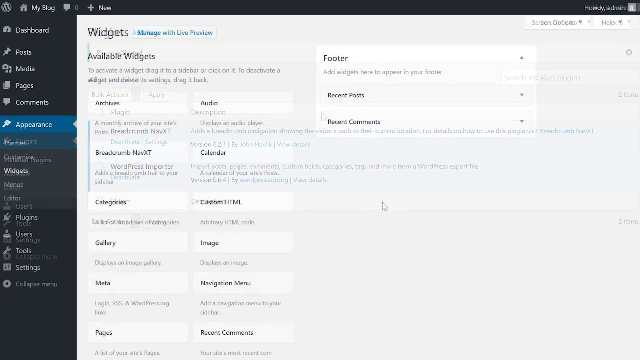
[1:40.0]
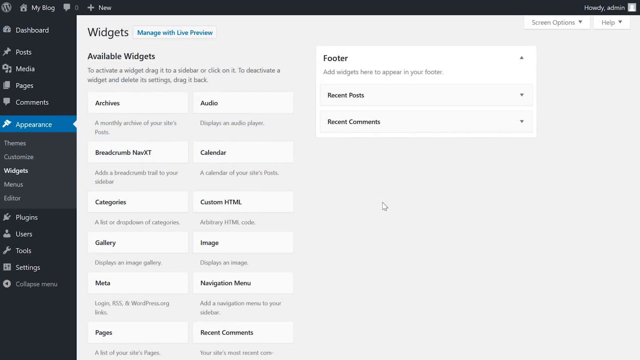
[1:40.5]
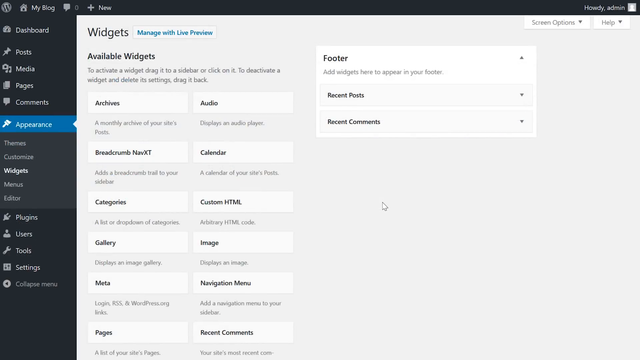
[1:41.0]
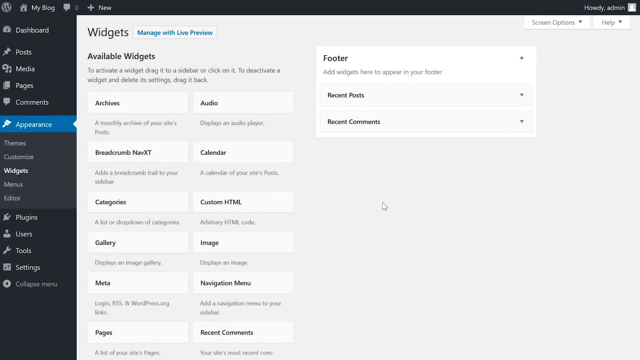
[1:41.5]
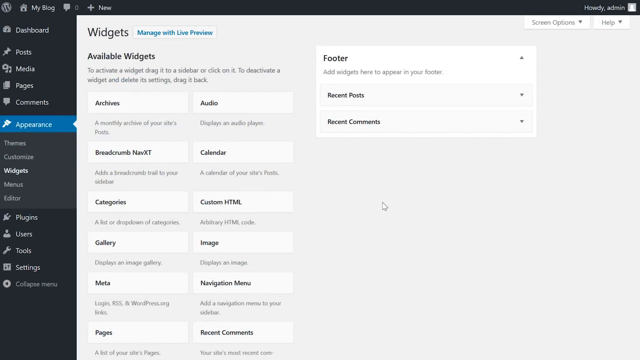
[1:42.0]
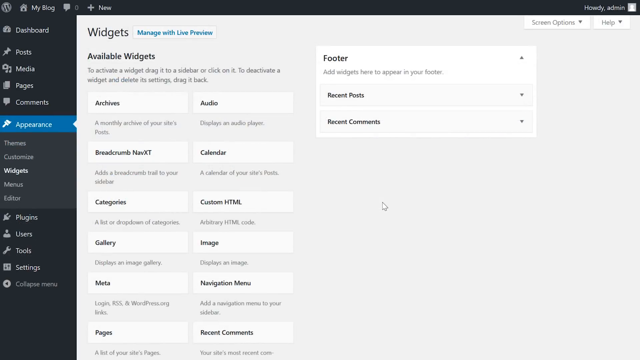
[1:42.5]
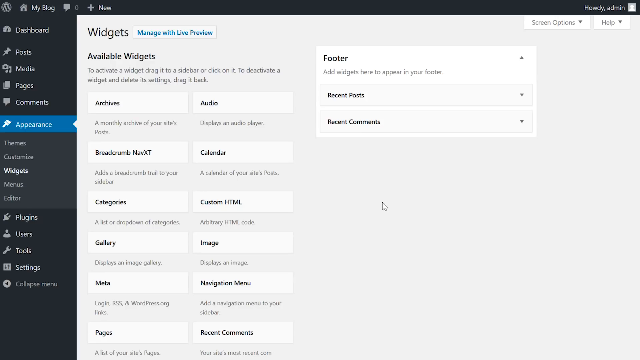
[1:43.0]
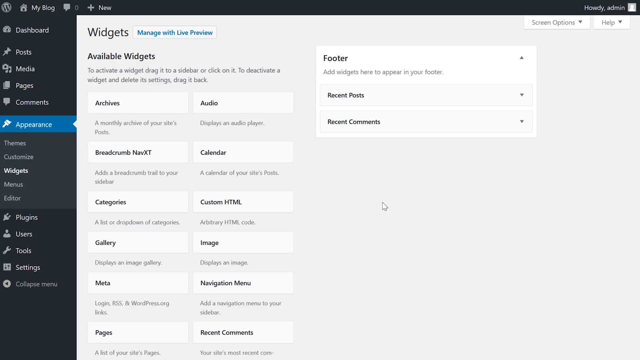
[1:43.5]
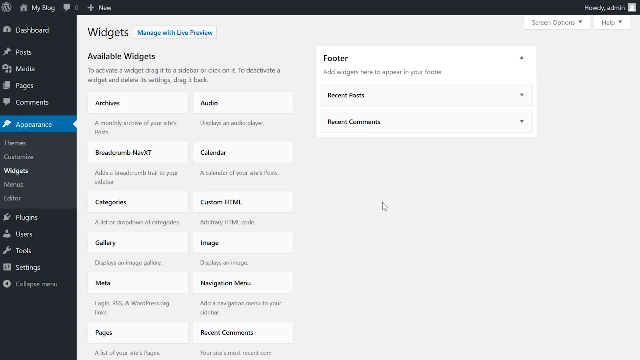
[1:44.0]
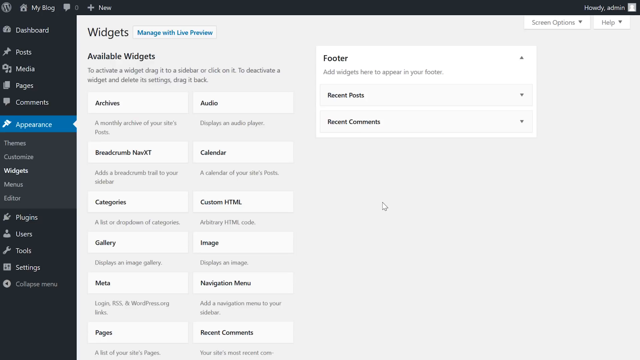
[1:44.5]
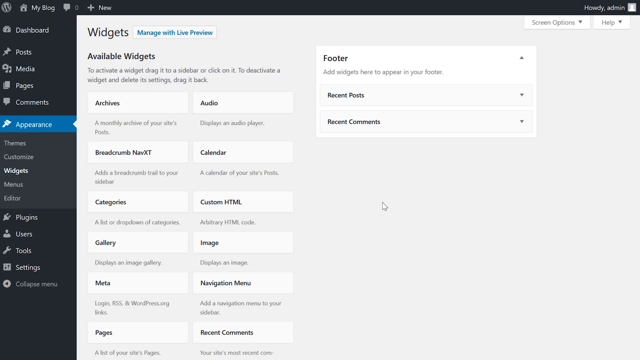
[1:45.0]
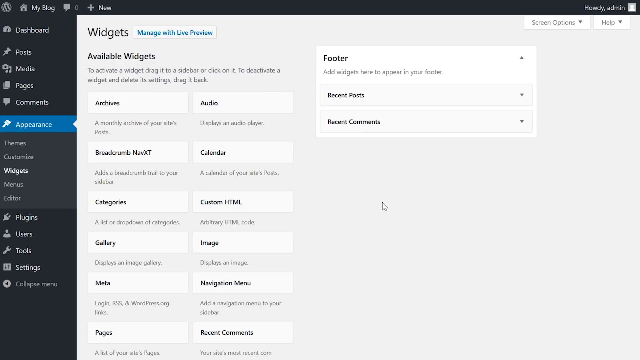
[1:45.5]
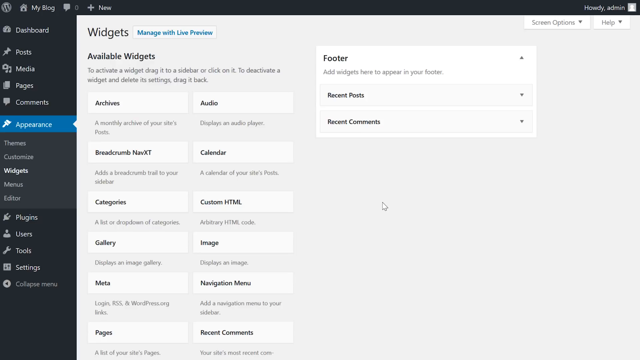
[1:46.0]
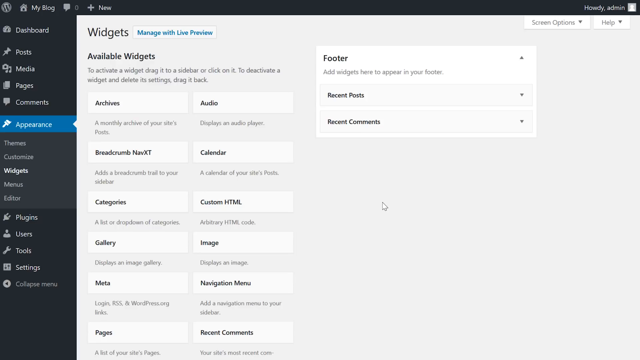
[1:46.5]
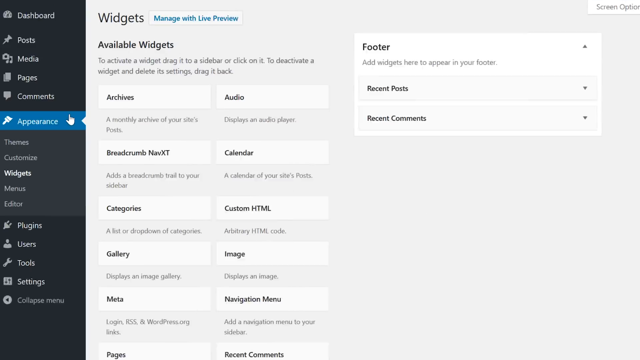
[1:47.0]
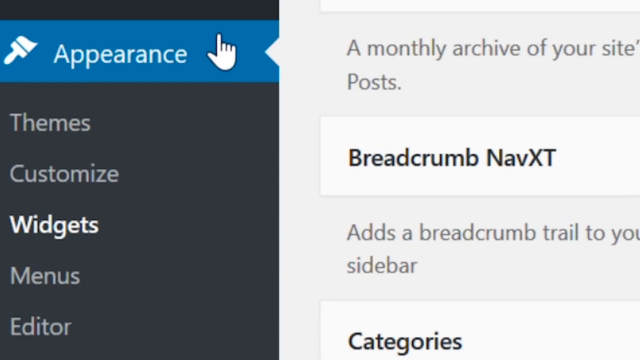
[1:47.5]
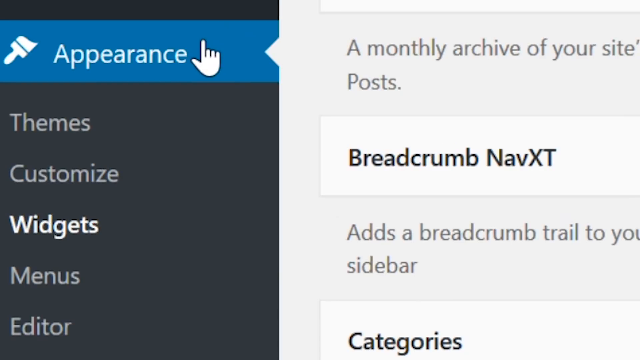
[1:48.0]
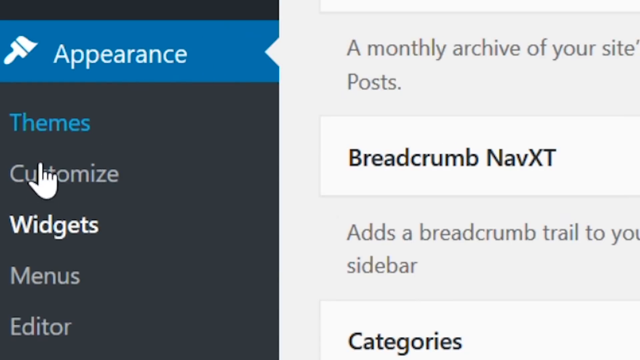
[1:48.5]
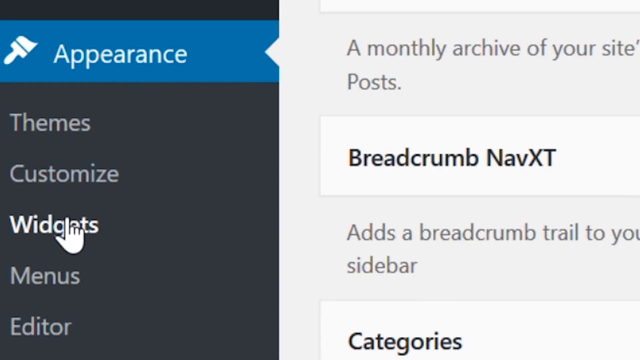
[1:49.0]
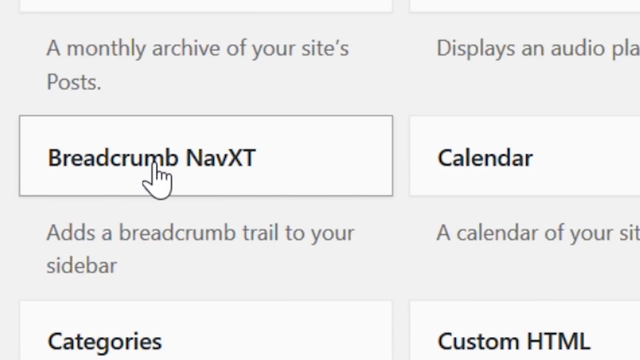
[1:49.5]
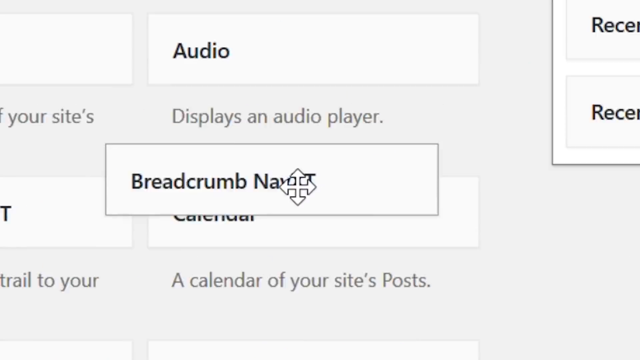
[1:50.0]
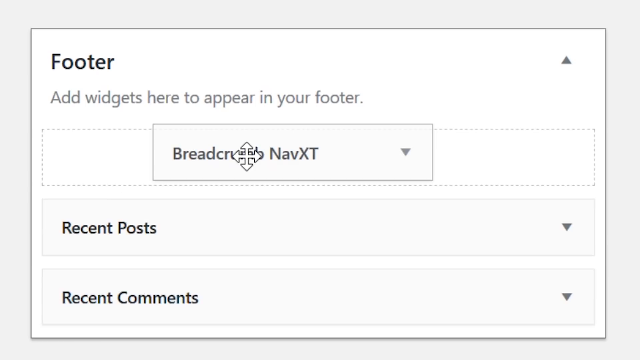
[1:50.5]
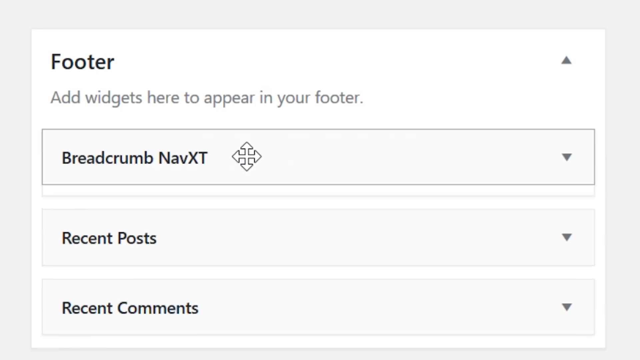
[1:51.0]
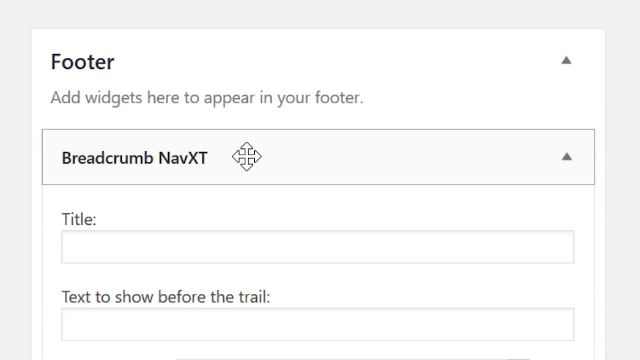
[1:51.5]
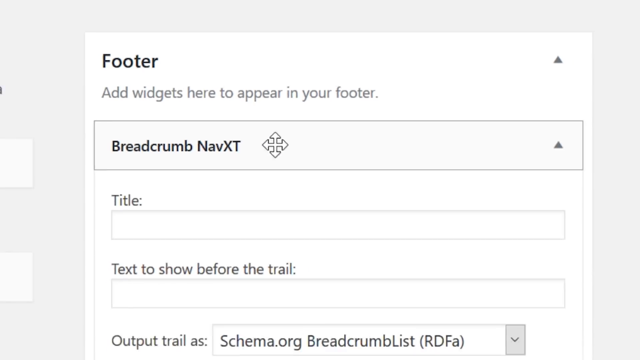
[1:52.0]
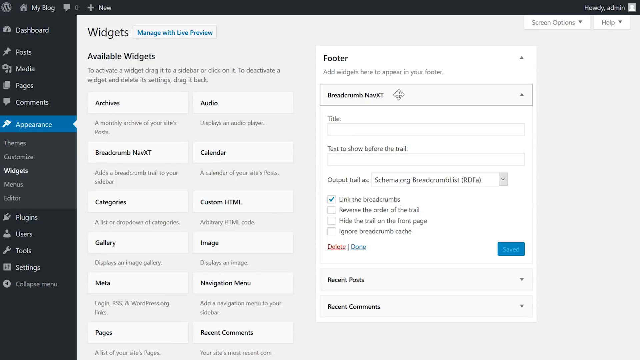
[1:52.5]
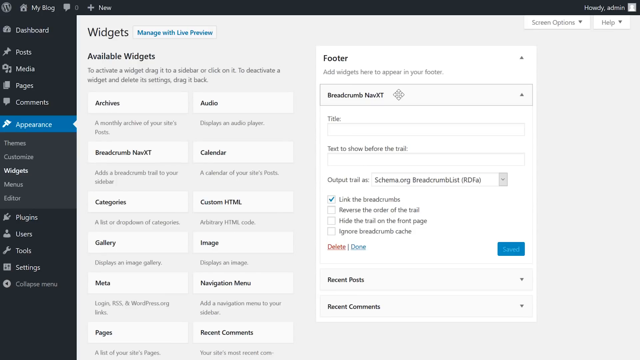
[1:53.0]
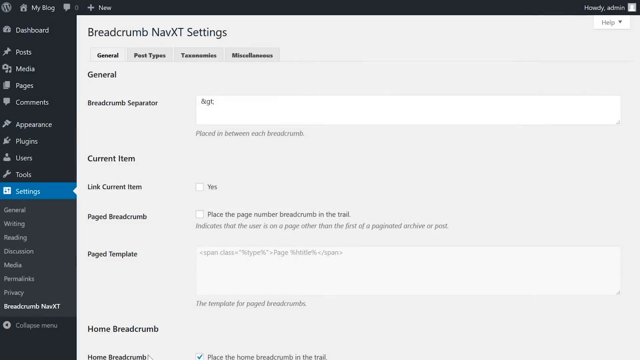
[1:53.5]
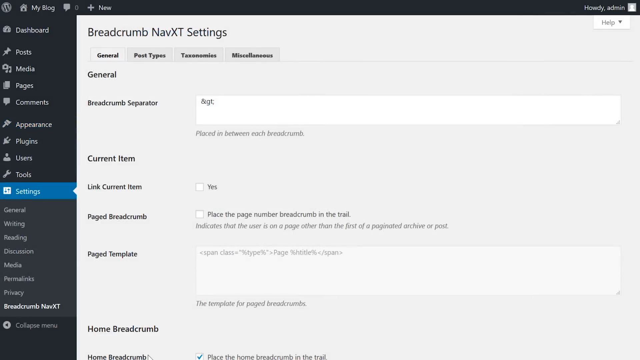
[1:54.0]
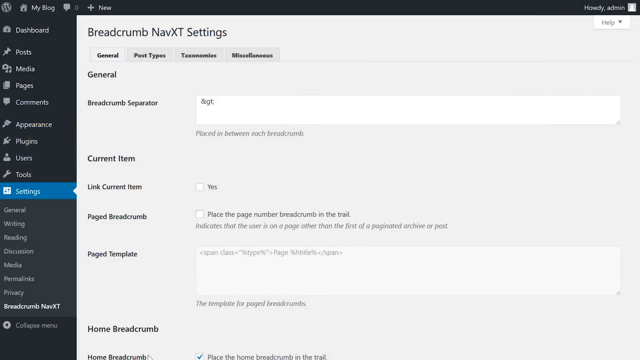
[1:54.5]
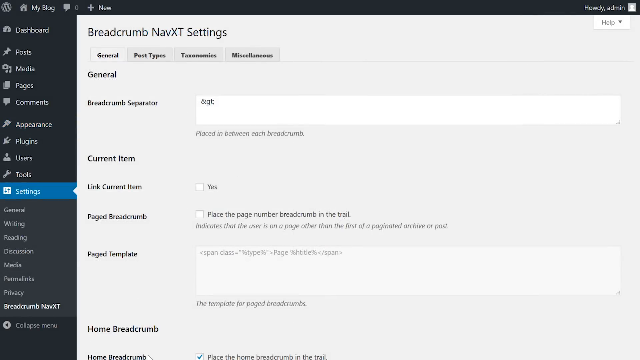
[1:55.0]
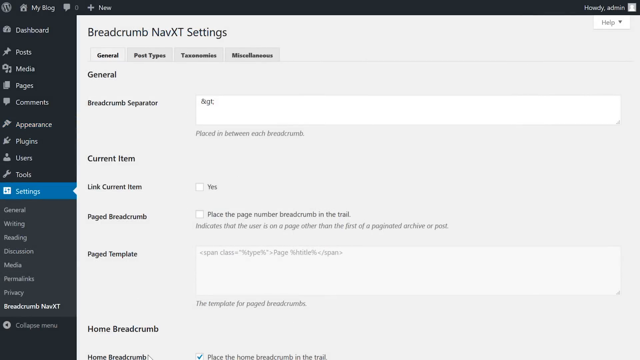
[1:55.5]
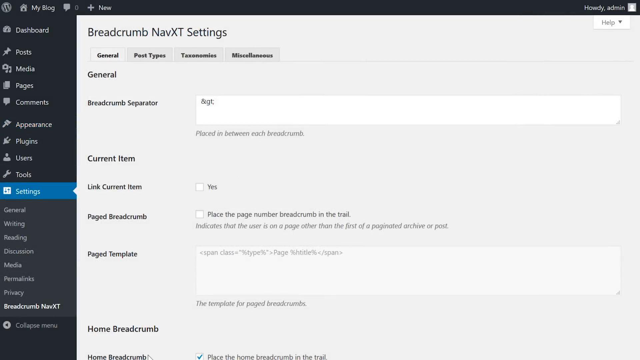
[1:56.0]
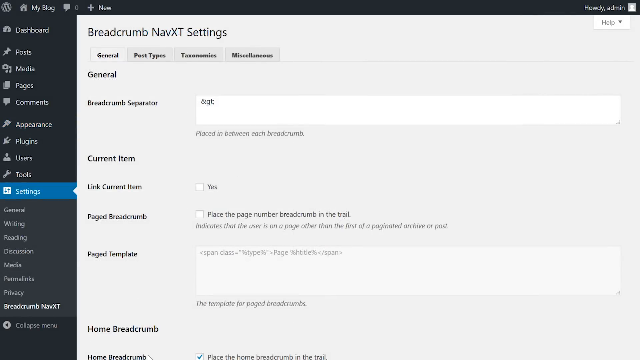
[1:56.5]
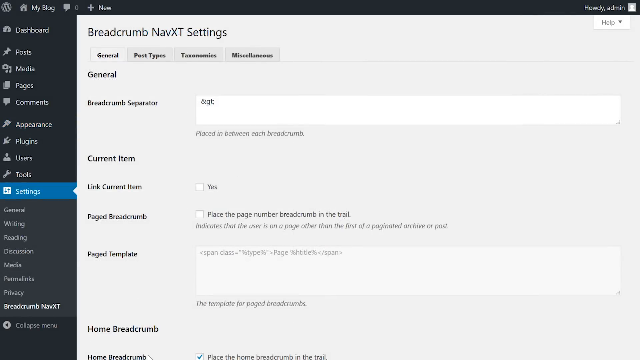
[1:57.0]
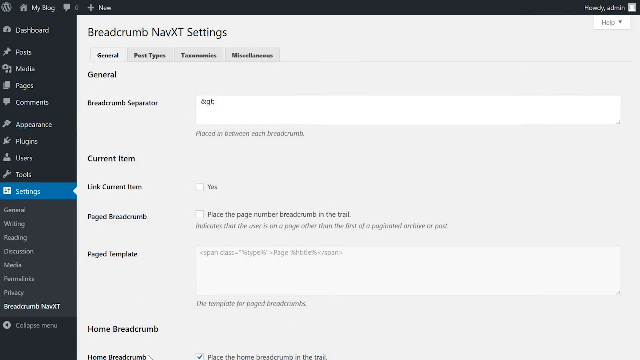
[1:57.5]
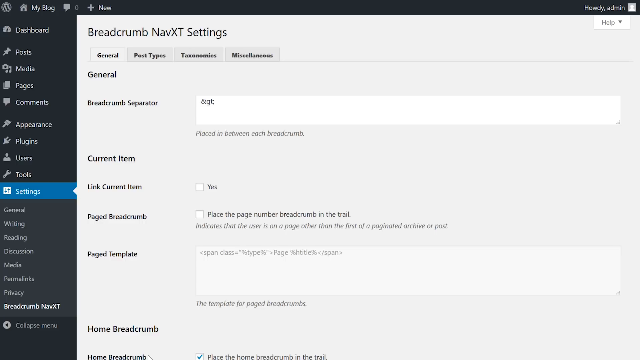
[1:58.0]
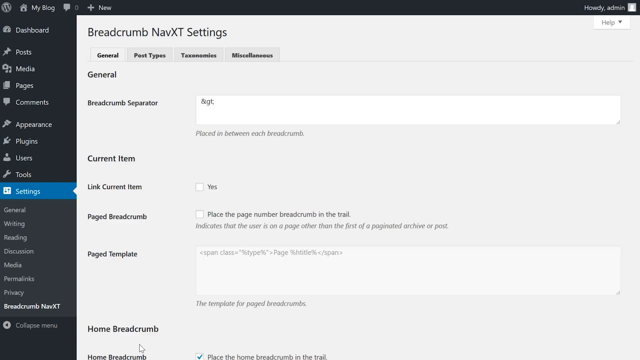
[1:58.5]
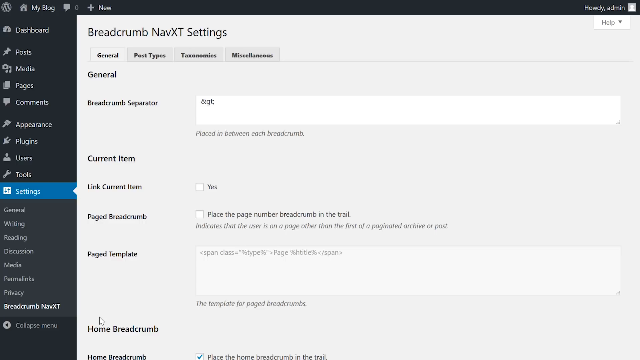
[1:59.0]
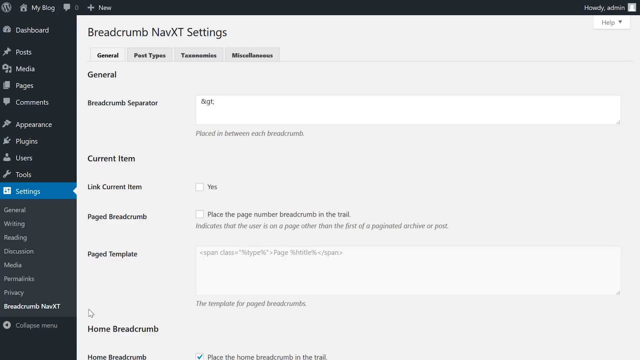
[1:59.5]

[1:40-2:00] The screen fades to the appearance tab, showing widgets and the available widgets. It stays here, showing a list of widgets that can be added and a footer on the right side of the screen. The screen then zooms into the appearance tab on the left, where options are listed underneath with widgets highlighted. The view quickly moves to the right to the Breadcrumb NAVXT plugin widget, which says "adds a breadcrumb trail to your sidebar" underneath. The user drags the widget over to the footer side and drops it there, and more settings pop up underneath. The view zooms out to the entire dashboard screen under the appearance section, then fades to the settings.